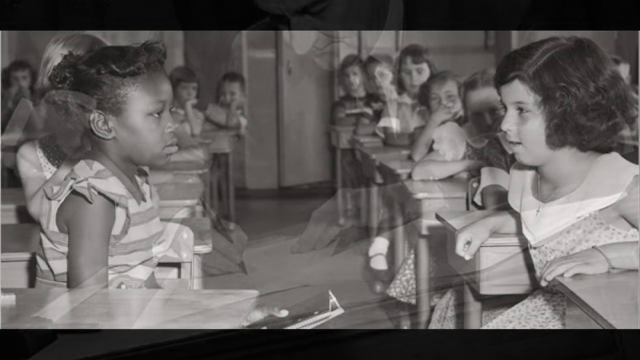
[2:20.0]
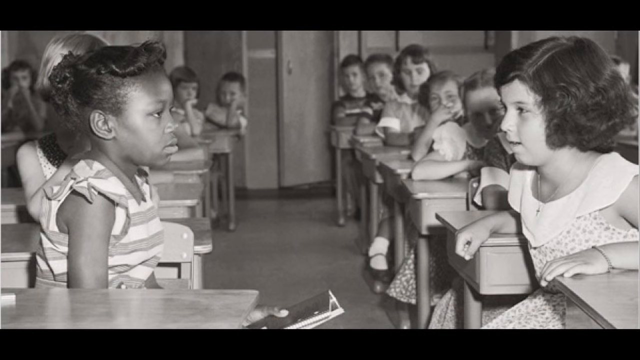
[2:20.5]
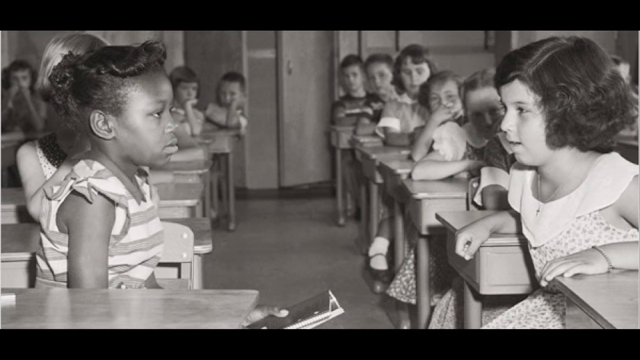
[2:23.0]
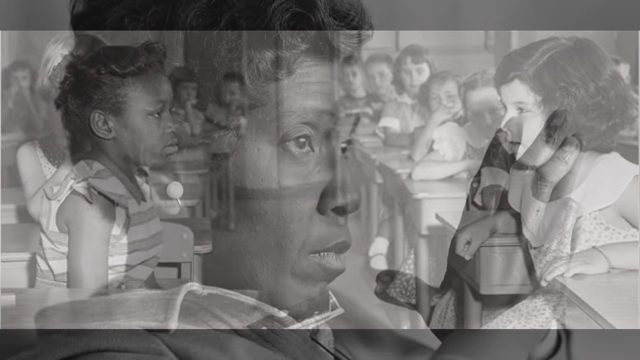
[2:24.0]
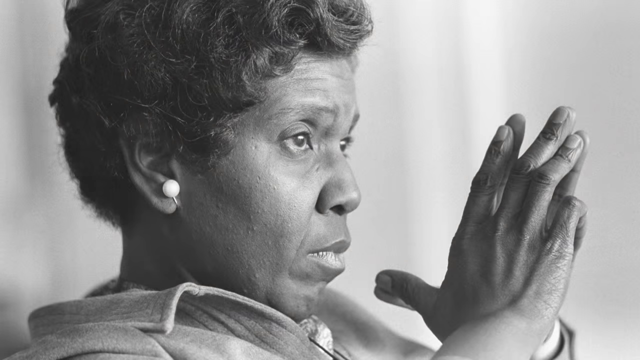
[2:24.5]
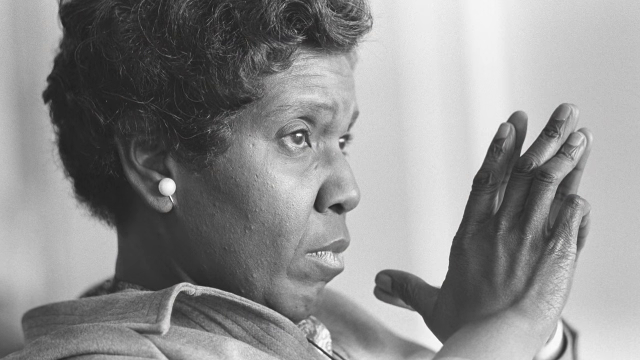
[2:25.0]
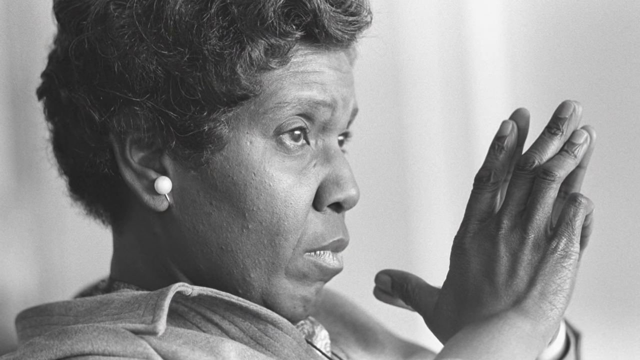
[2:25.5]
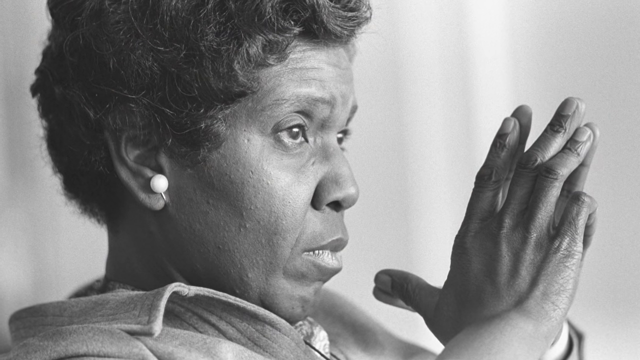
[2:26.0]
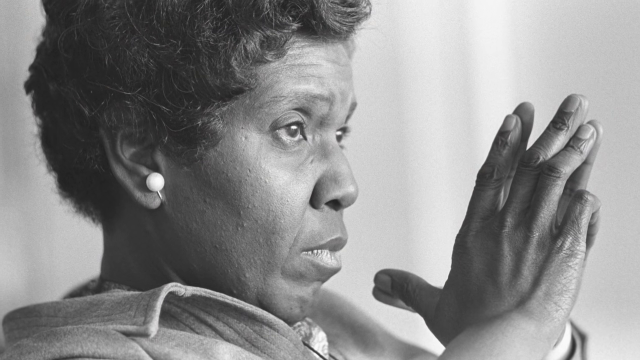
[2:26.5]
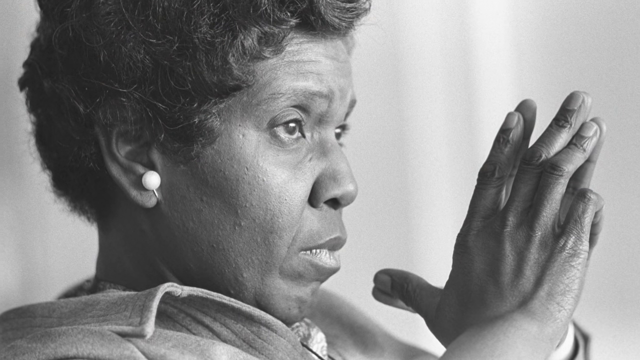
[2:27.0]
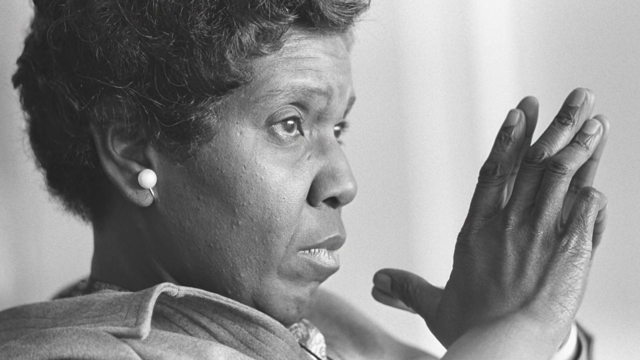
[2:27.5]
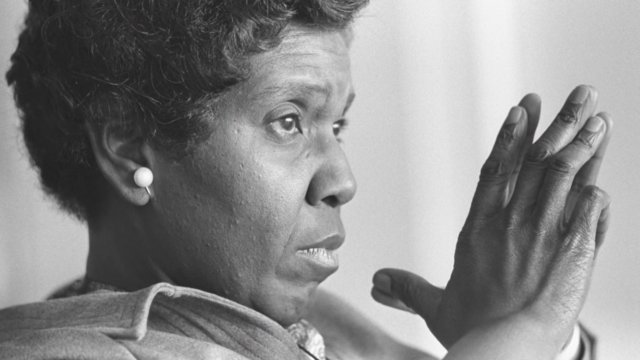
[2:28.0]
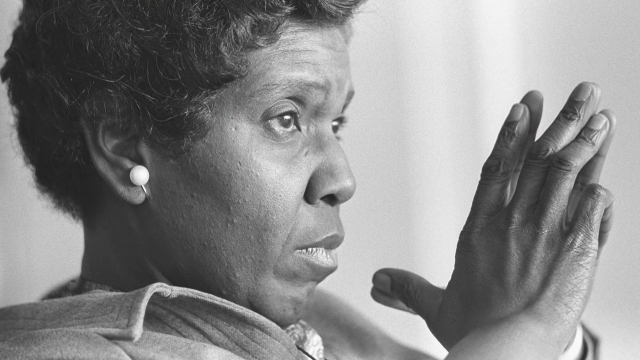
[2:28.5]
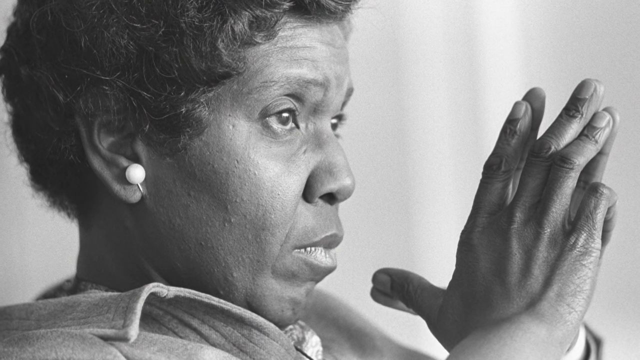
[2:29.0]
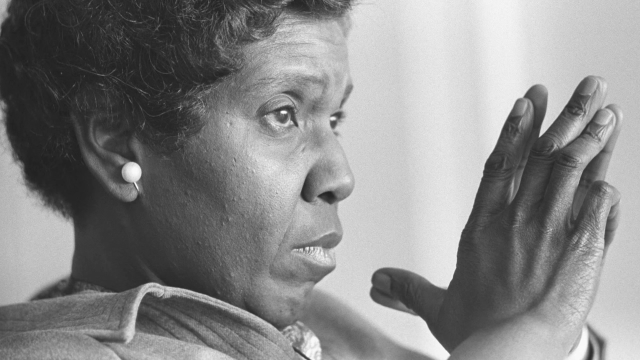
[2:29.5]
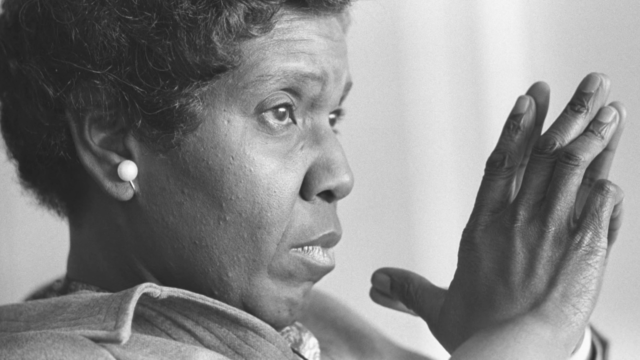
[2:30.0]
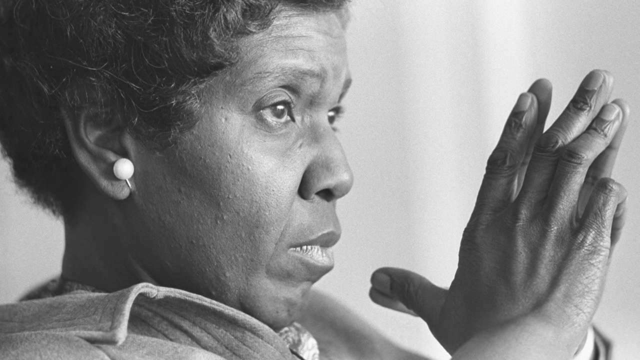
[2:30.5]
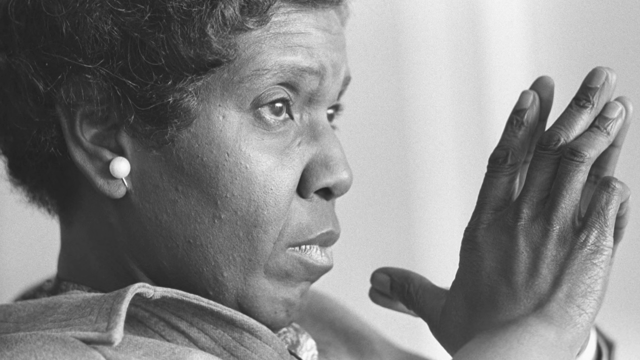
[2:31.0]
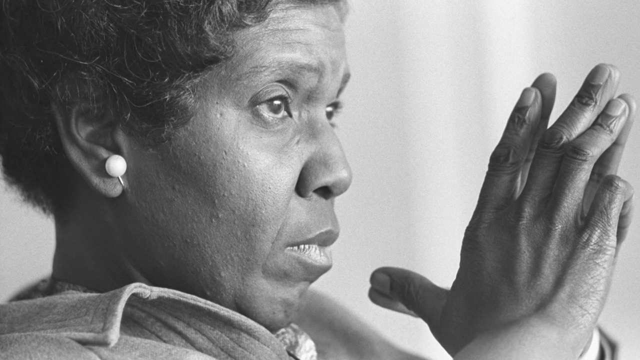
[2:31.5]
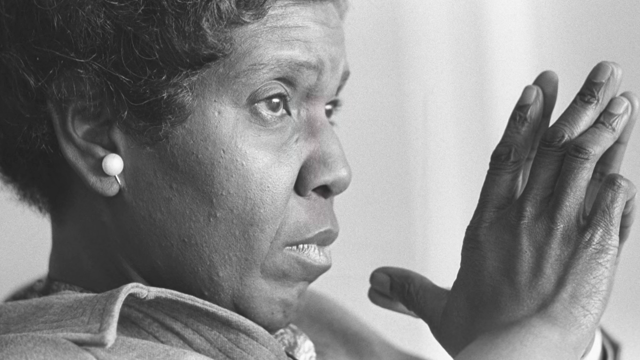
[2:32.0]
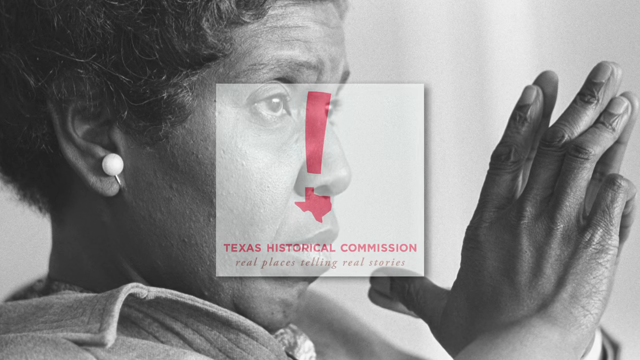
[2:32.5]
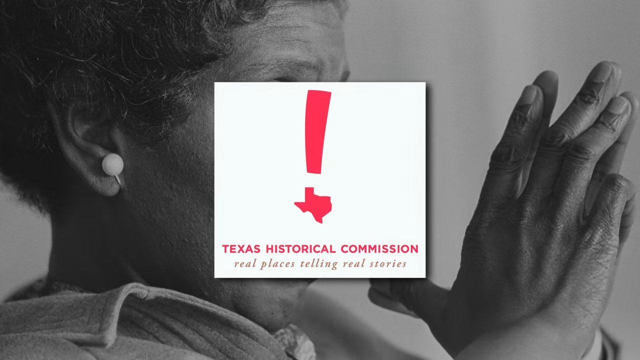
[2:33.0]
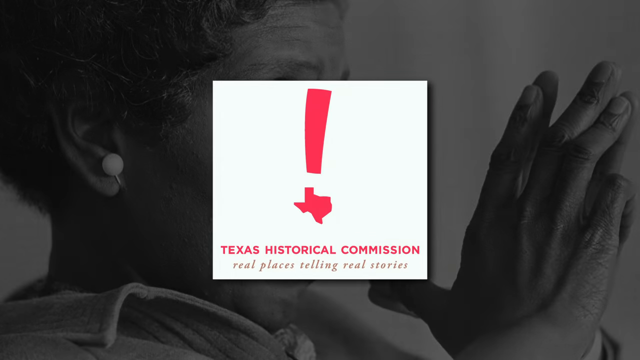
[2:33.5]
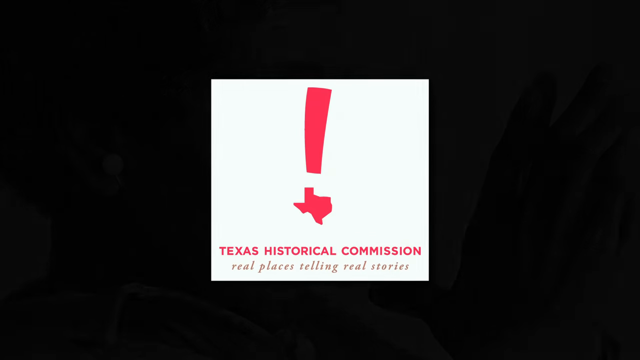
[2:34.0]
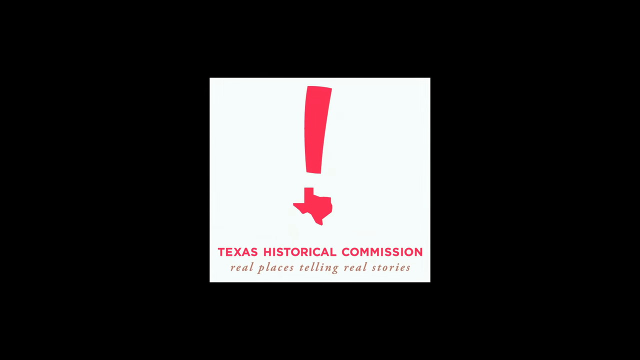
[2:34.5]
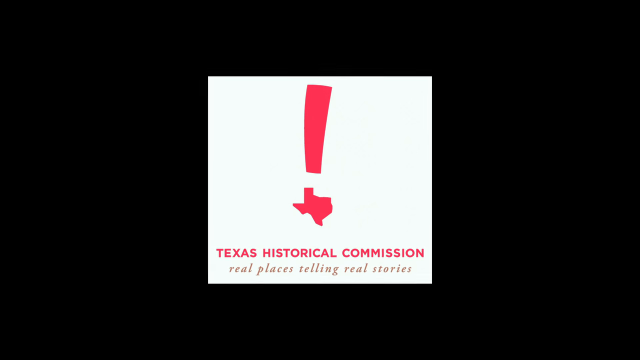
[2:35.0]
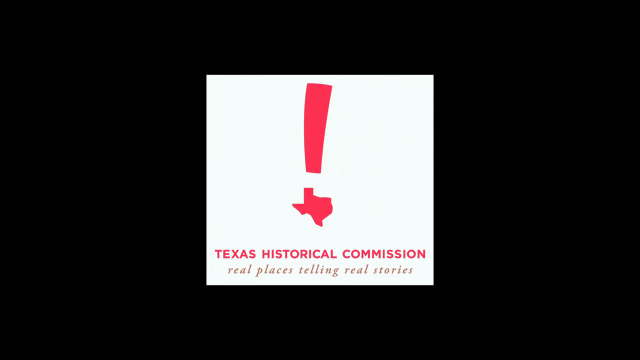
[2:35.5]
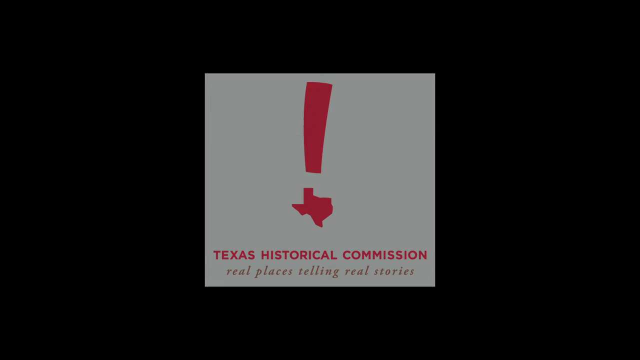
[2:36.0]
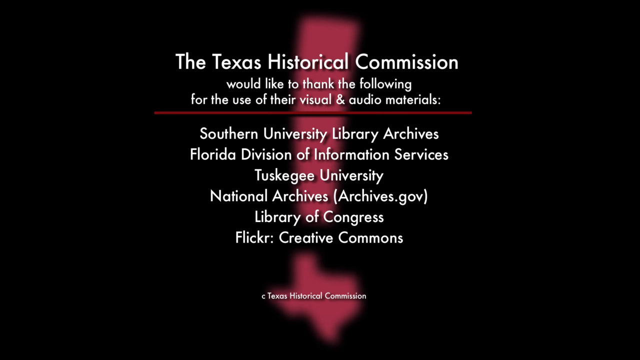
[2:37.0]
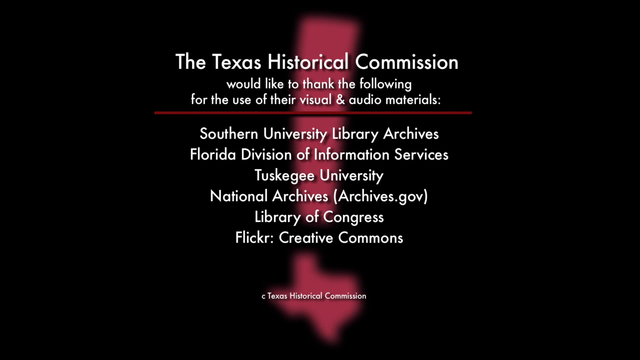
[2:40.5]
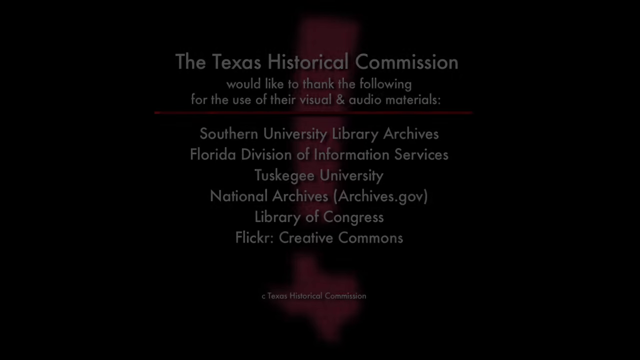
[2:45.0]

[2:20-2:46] In a school classroom, a black girl and a white girl sit next to each other at desks and stare at each other. A portrait shows an unidentified older black woman with her hands together, wearing pearl earrings. Text about the Texas Historical Commission and "rural places telling rural stories" appears, apparently identifying who made the video, followed by "Texas Historic Commission would like to thank the following for the use of their visual audio materials".